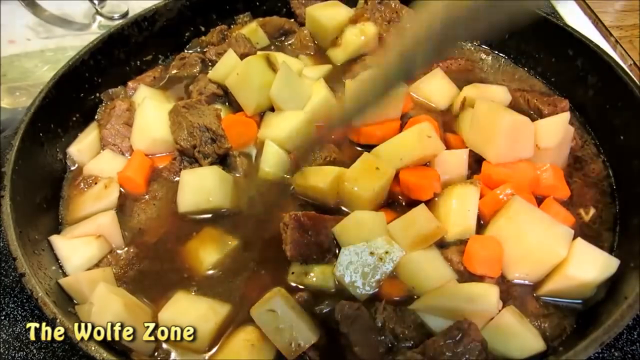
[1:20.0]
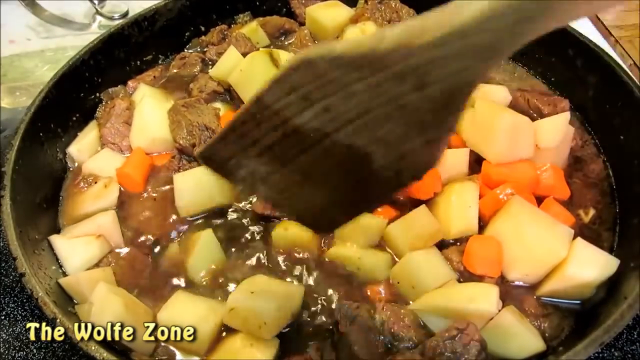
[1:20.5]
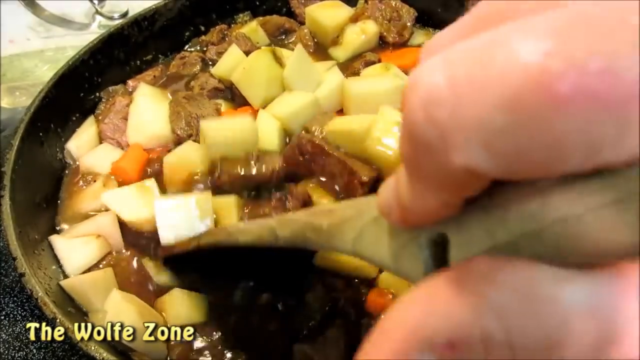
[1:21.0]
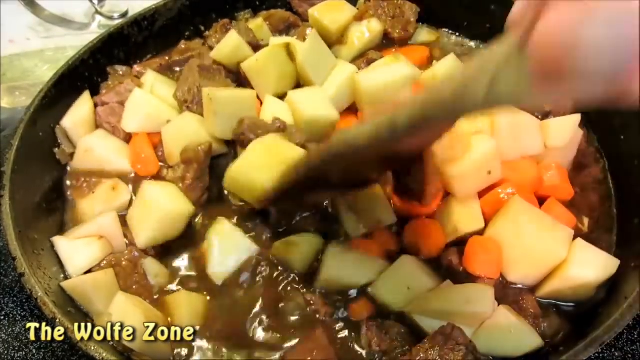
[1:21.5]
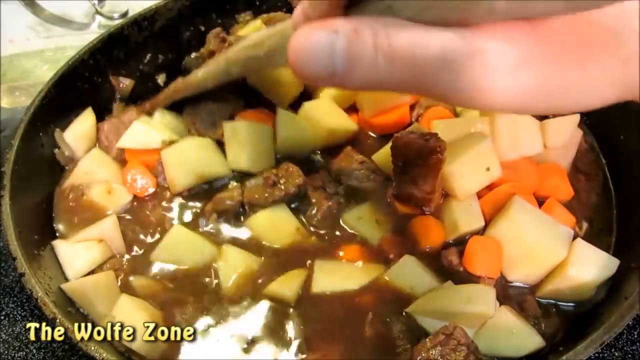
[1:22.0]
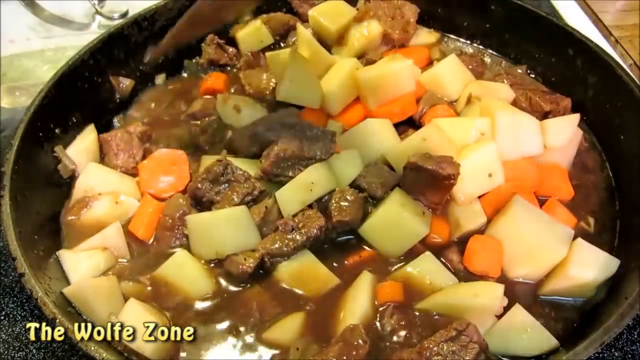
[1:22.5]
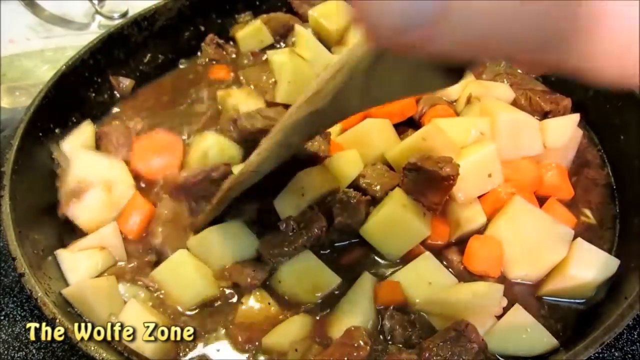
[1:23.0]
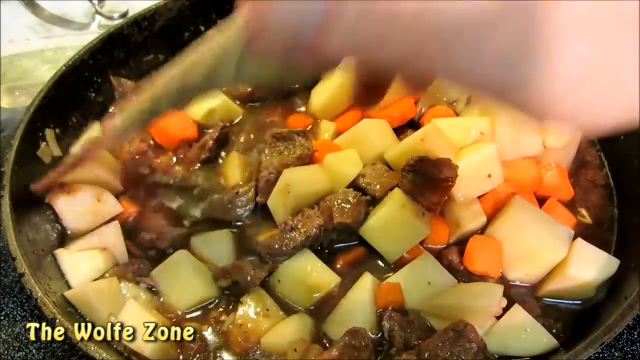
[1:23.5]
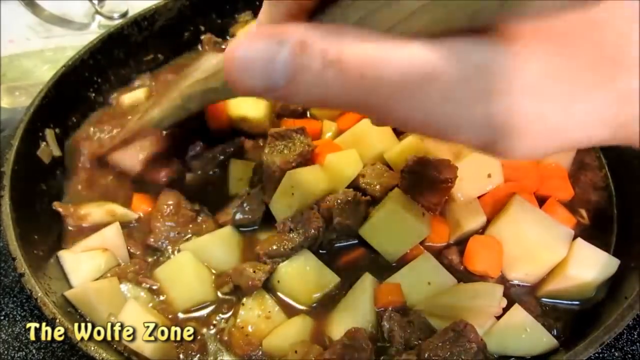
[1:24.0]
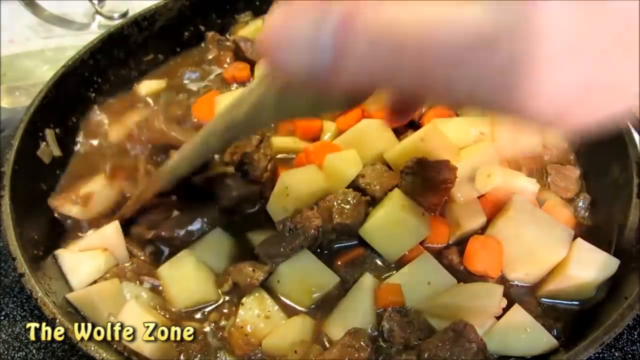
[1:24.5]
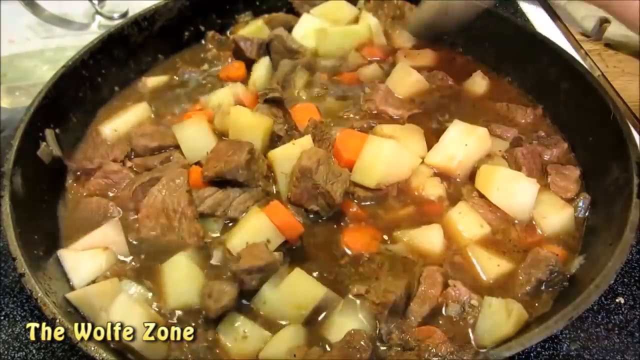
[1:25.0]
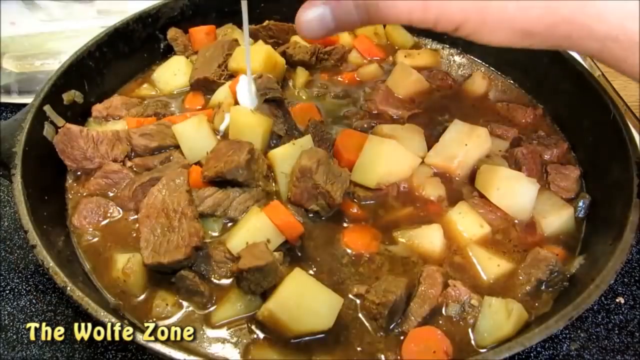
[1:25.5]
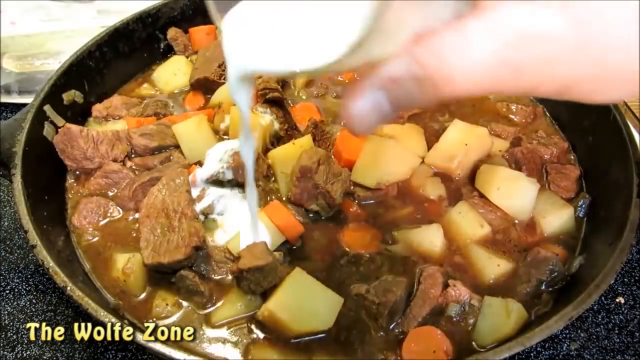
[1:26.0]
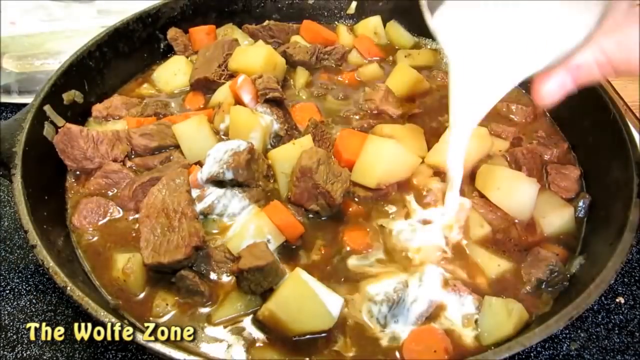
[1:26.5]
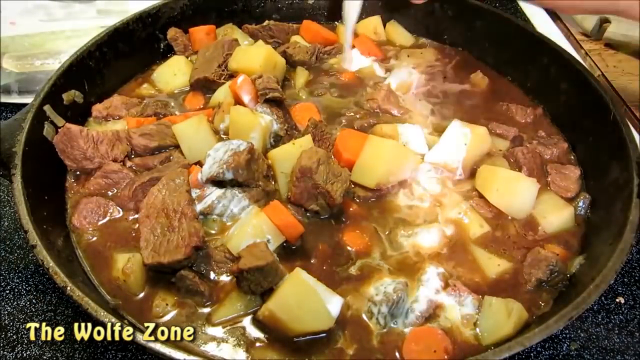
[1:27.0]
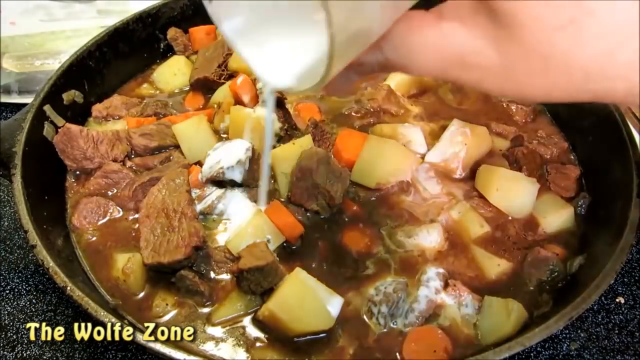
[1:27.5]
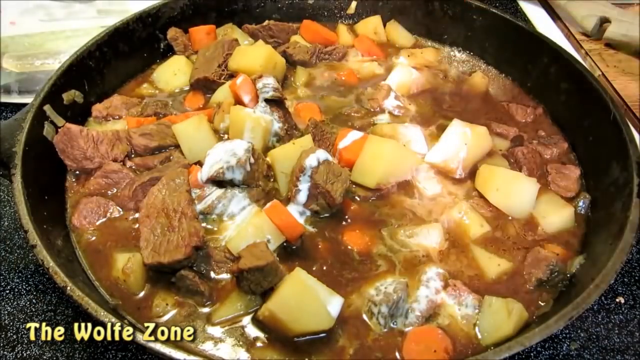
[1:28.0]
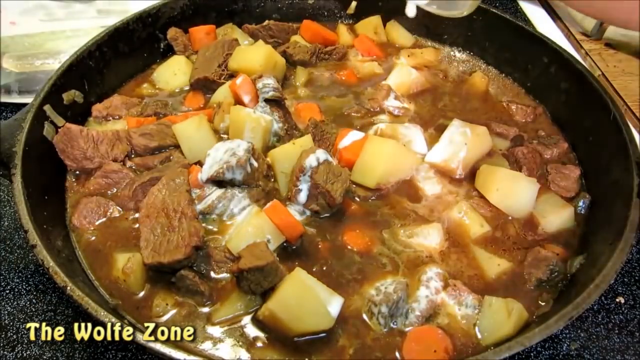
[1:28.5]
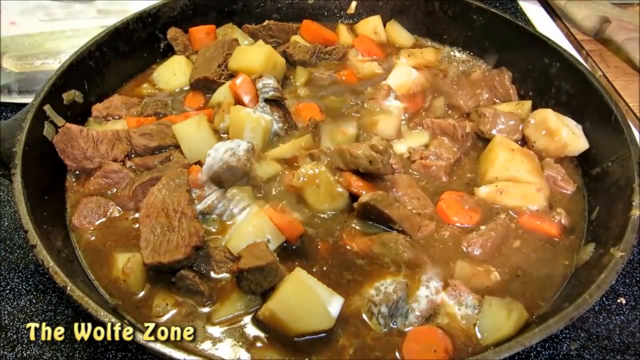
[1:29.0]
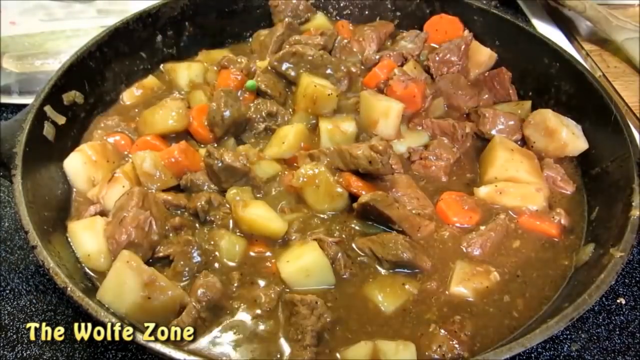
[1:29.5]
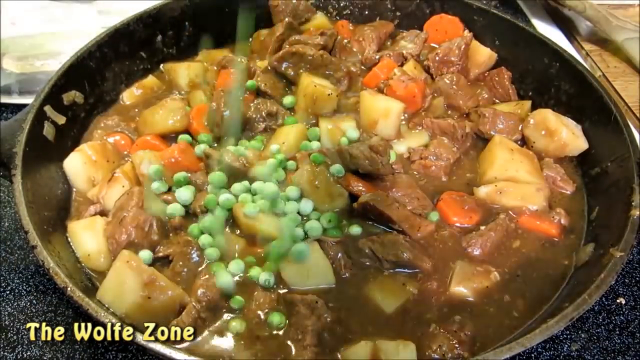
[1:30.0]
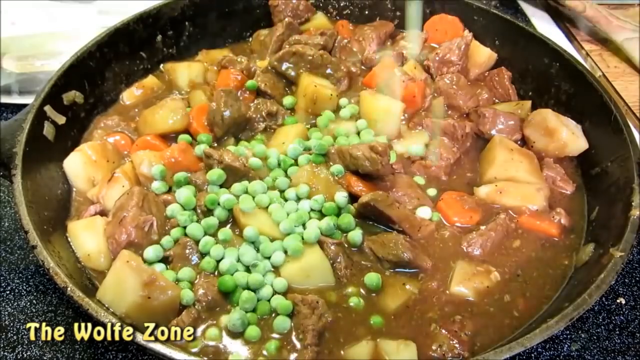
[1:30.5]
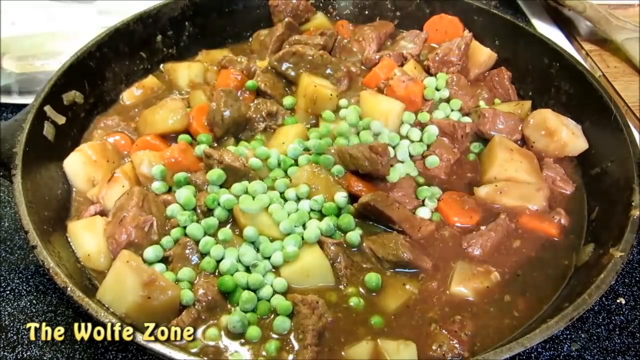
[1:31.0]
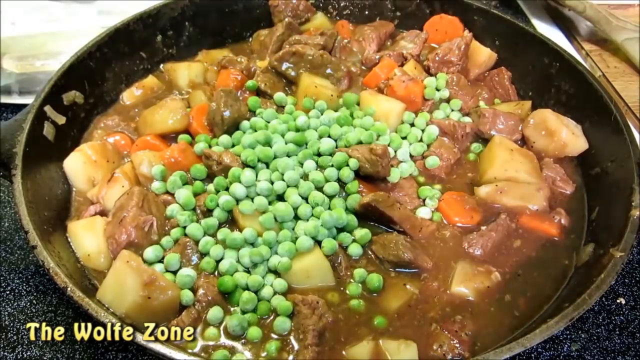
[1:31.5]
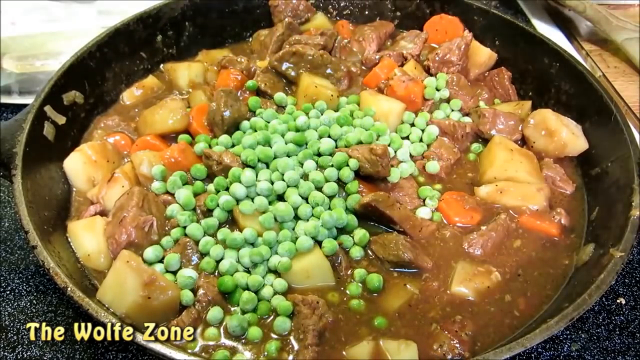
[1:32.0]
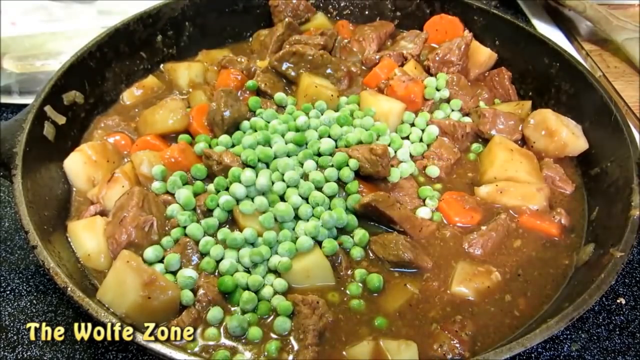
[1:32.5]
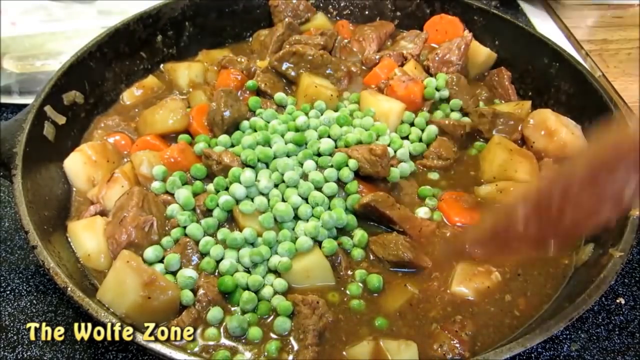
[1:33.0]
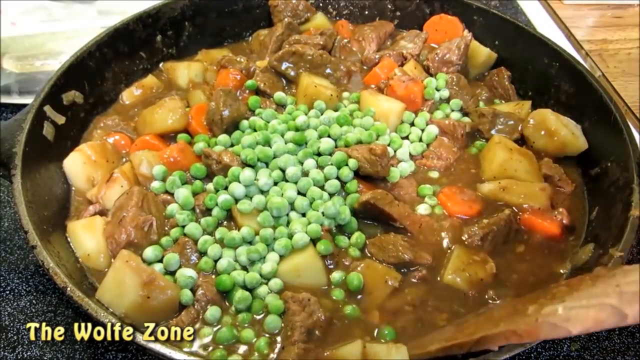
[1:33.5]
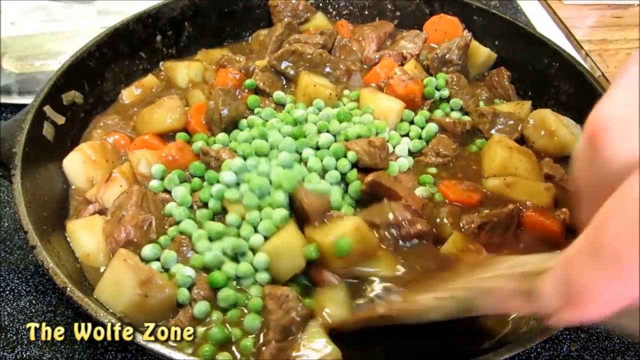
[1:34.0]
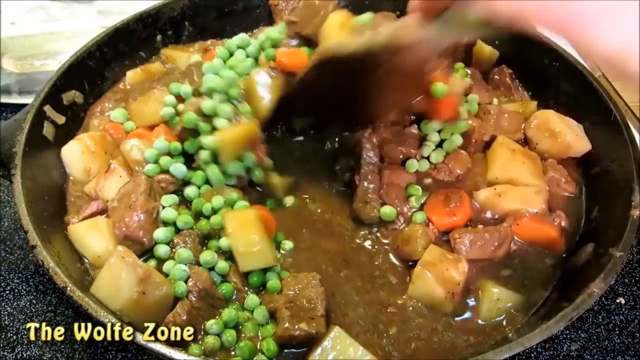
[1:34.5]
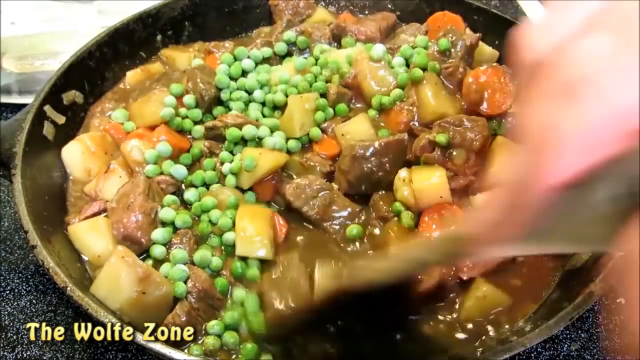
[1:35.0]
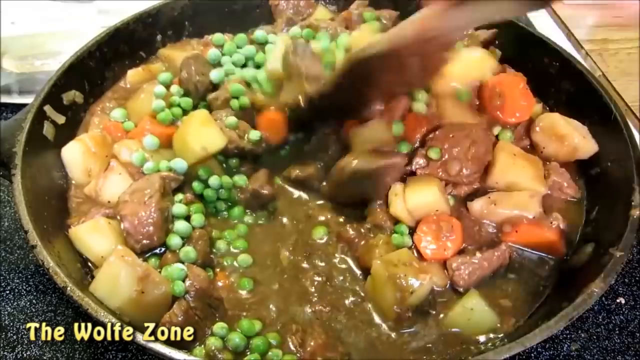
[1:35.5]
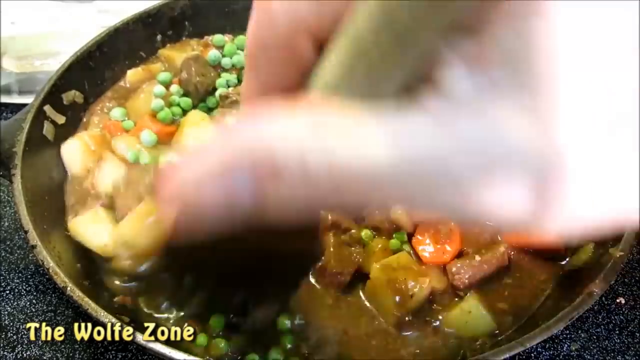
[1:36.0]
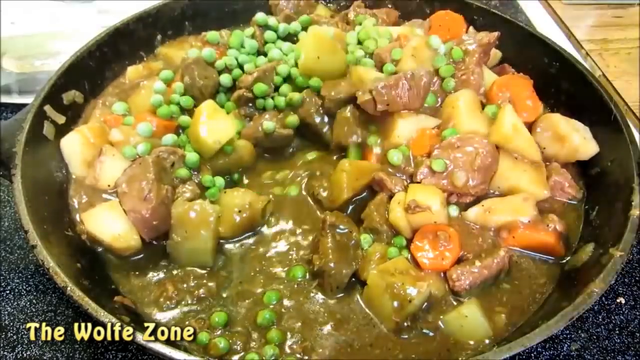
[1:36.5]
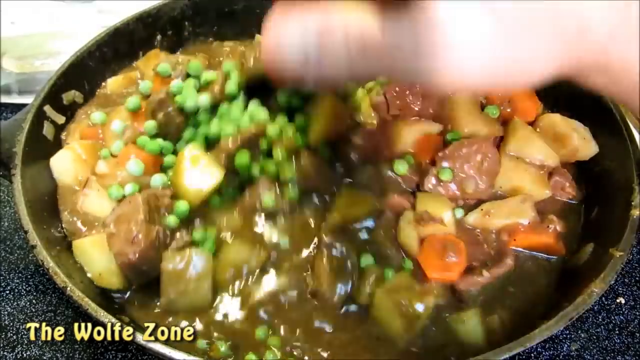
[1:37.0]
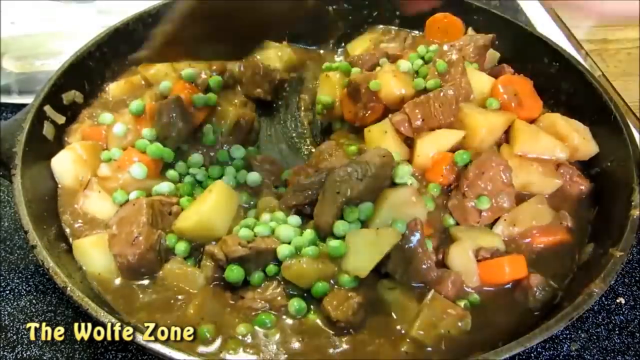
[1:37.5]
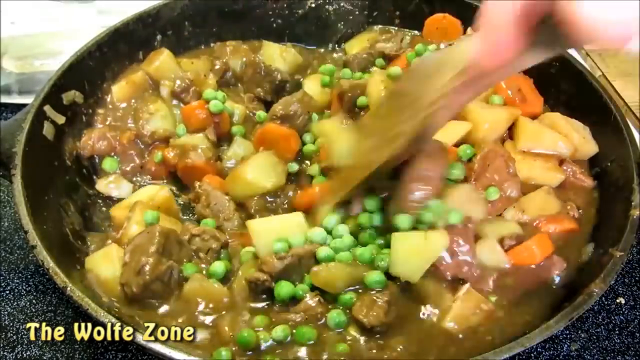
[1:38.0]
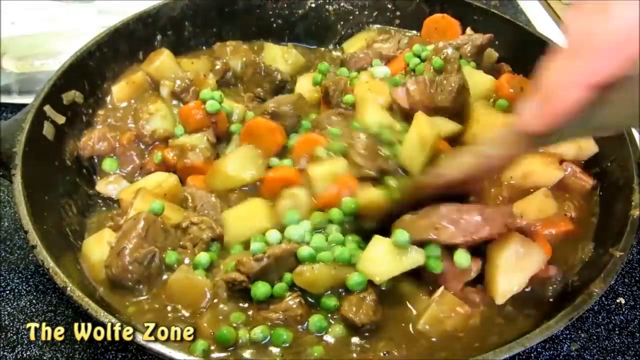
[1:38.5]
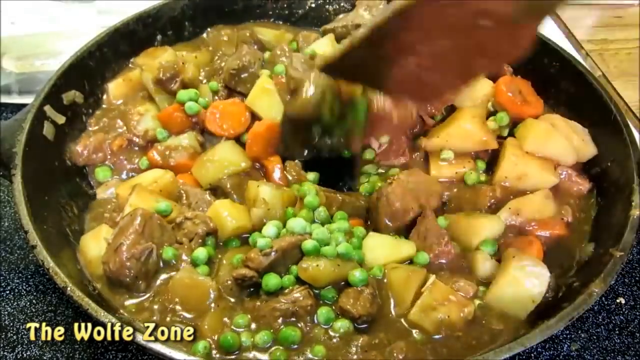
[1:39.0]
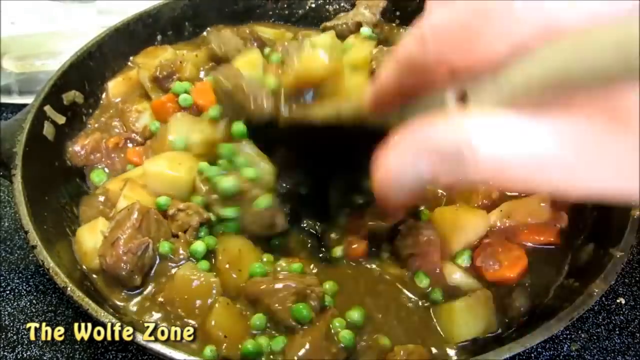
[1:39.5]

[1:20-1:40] The man, possibly named Wolf, adds heavy cream to the mixture of potatoes, carrots, onions and meat and mixes it, then mixes in frozen peas, making an almost wilderness-style stew. The potatoes and carrots do not seem to be cooked yet.